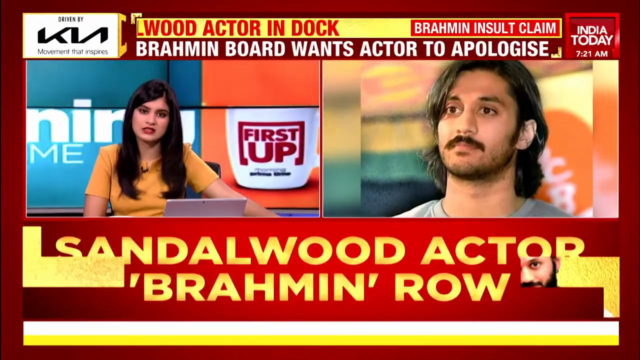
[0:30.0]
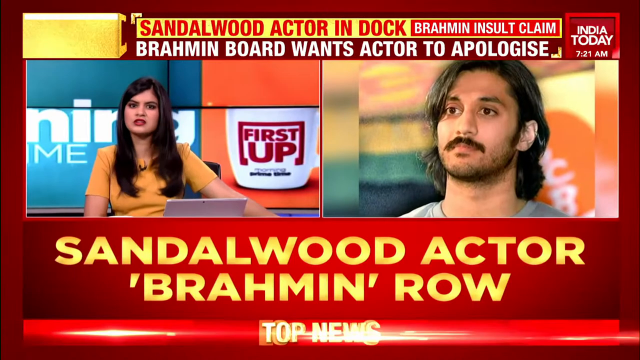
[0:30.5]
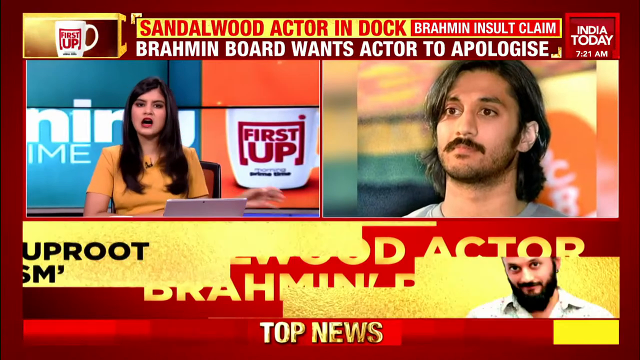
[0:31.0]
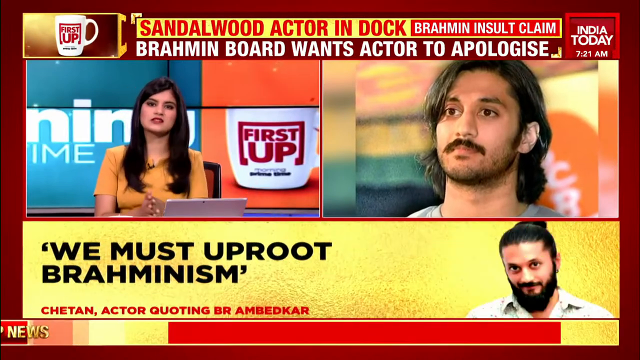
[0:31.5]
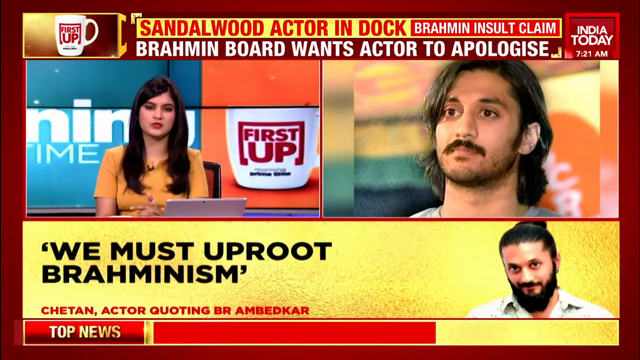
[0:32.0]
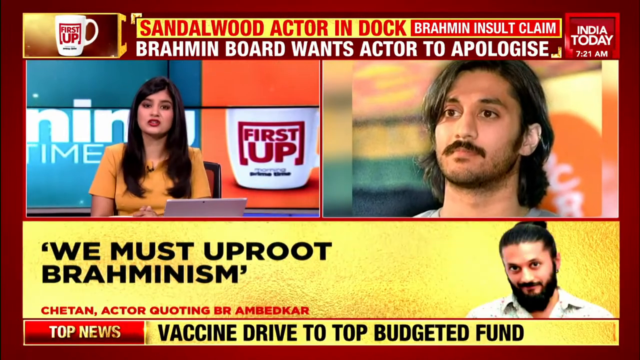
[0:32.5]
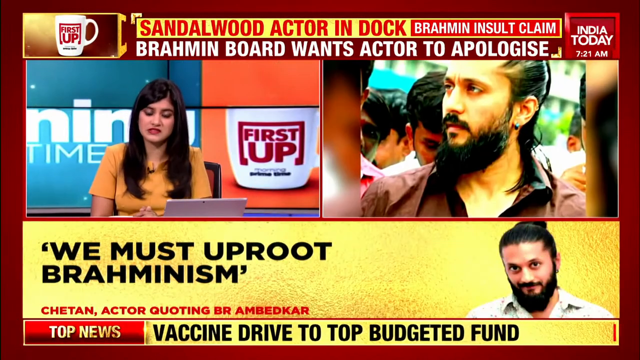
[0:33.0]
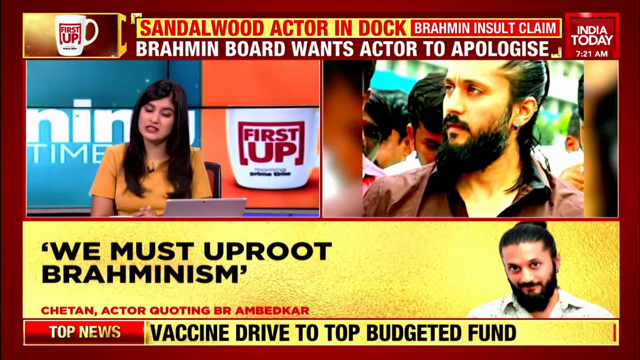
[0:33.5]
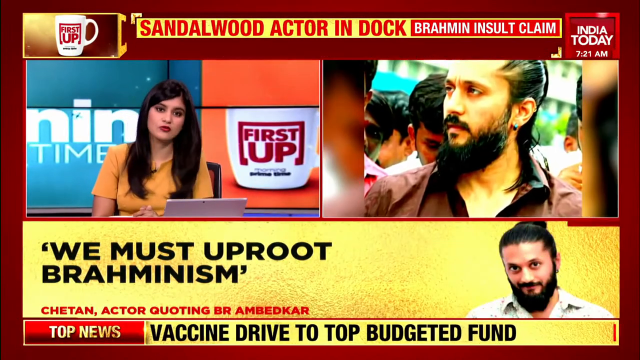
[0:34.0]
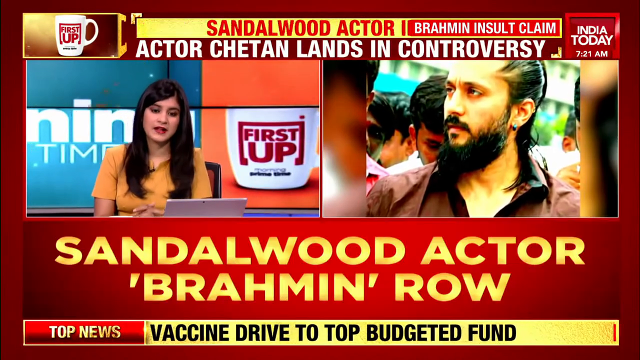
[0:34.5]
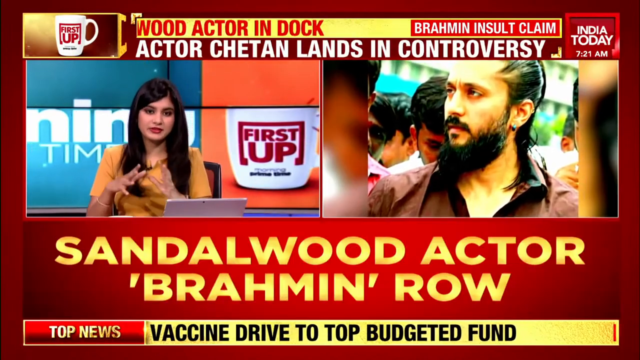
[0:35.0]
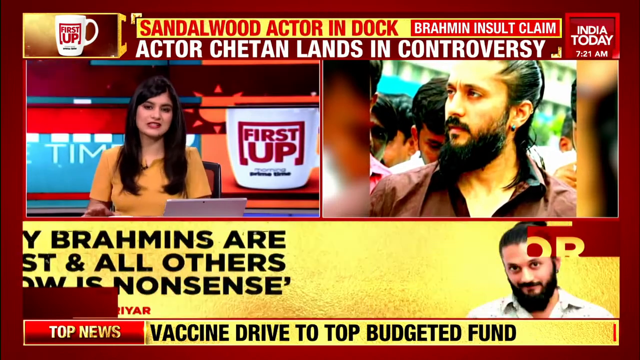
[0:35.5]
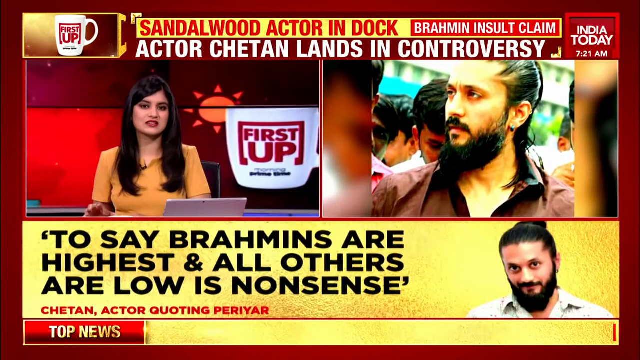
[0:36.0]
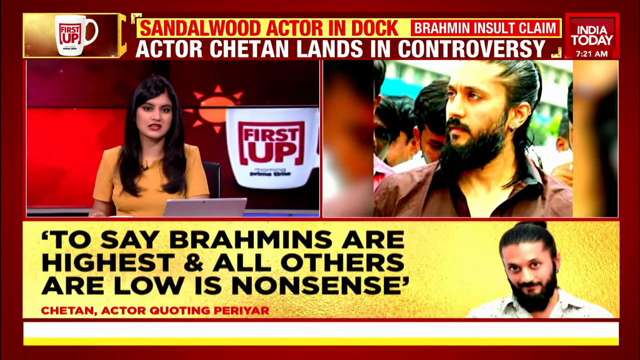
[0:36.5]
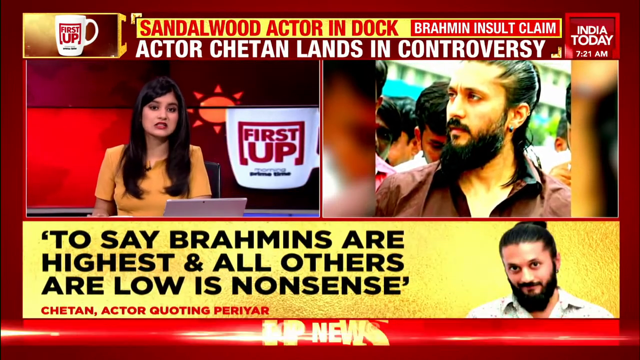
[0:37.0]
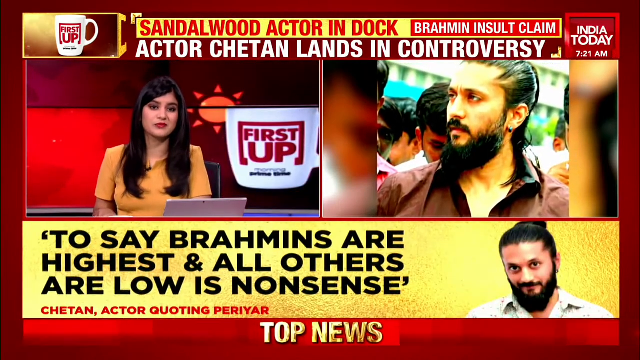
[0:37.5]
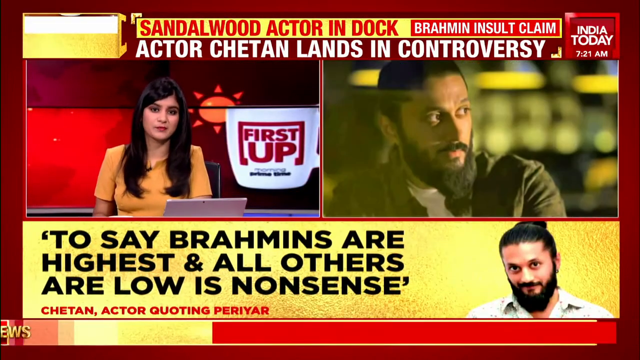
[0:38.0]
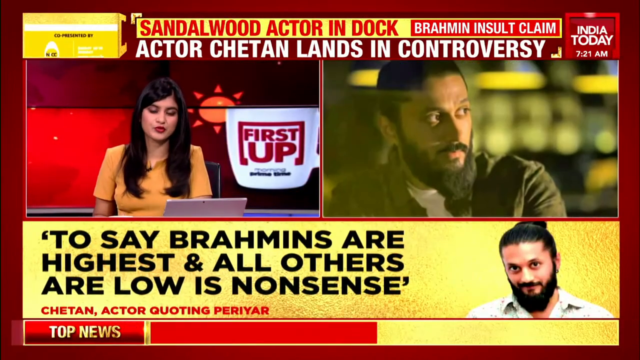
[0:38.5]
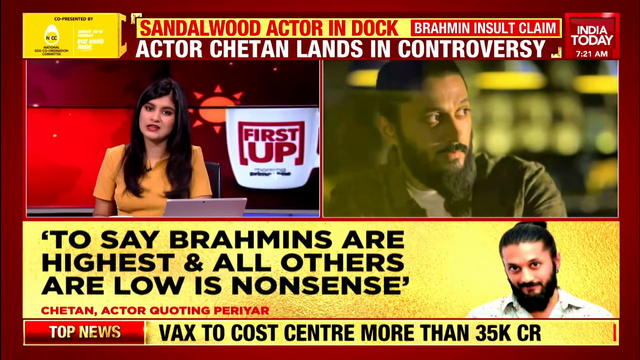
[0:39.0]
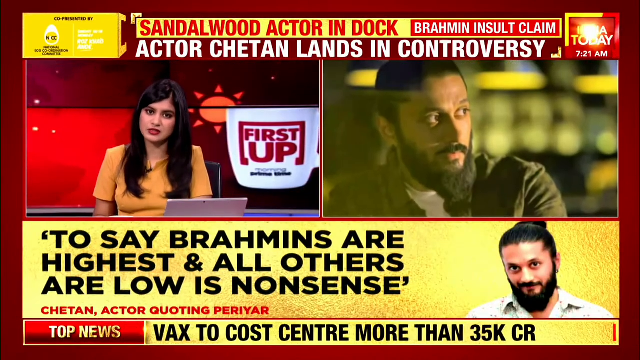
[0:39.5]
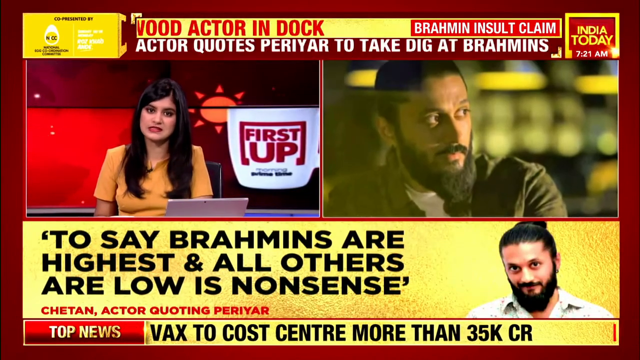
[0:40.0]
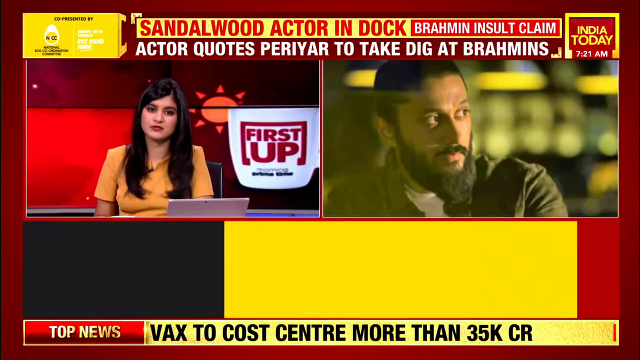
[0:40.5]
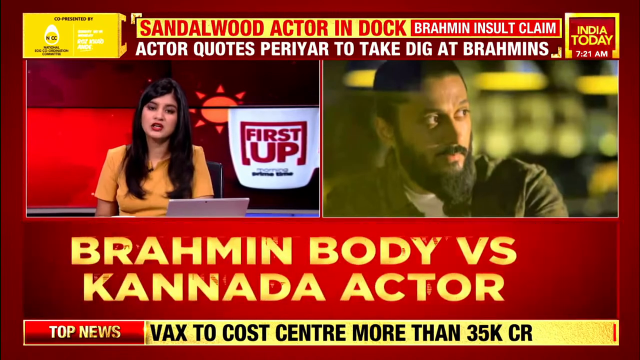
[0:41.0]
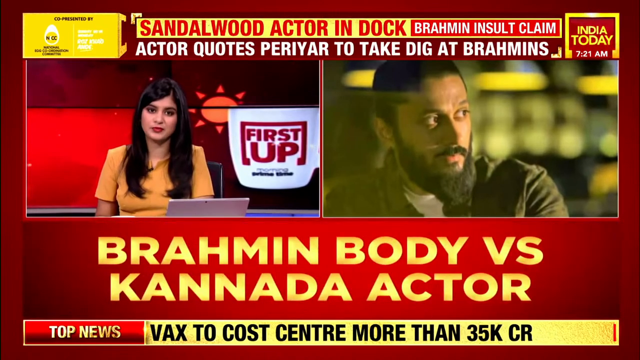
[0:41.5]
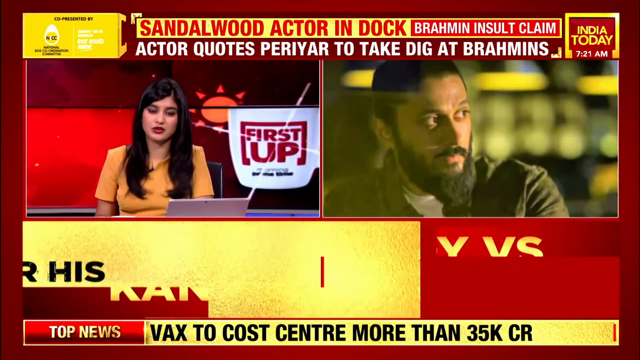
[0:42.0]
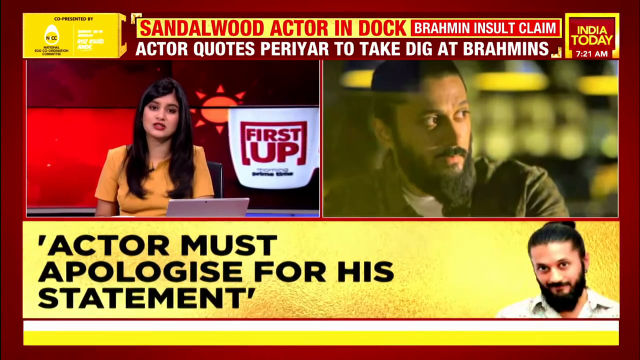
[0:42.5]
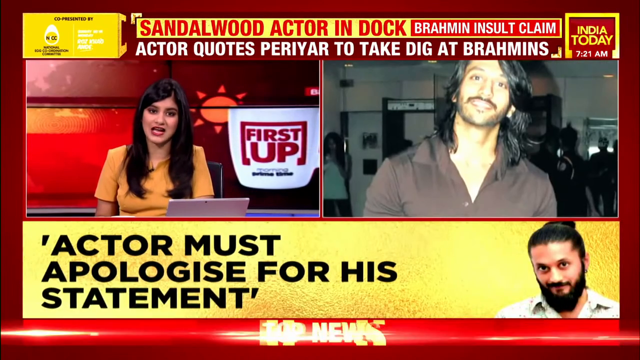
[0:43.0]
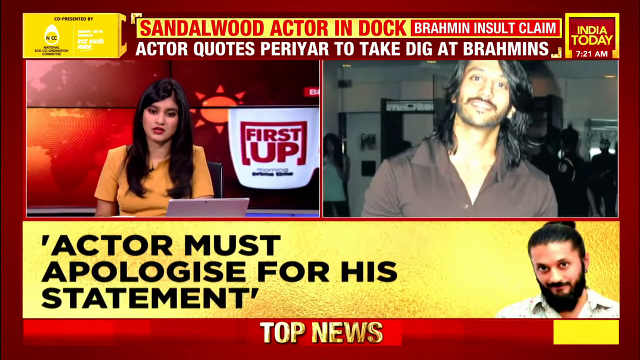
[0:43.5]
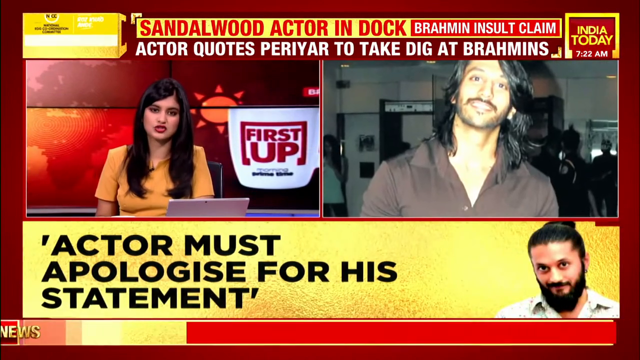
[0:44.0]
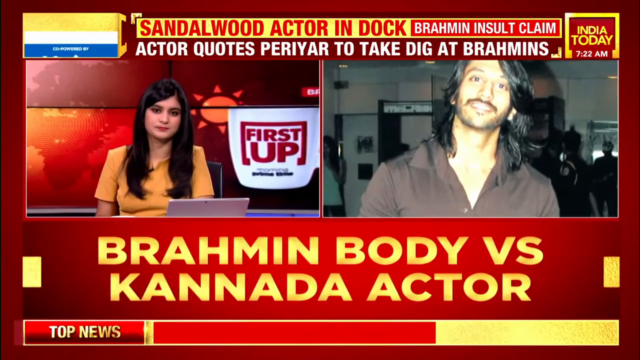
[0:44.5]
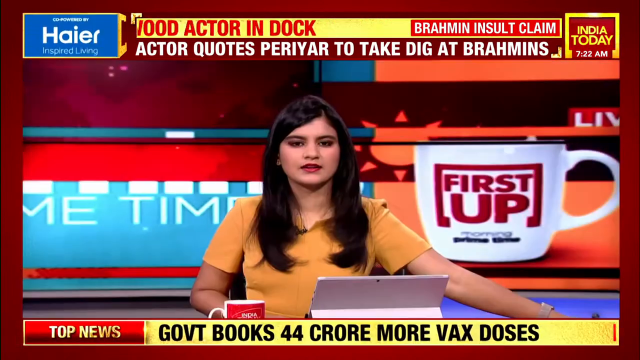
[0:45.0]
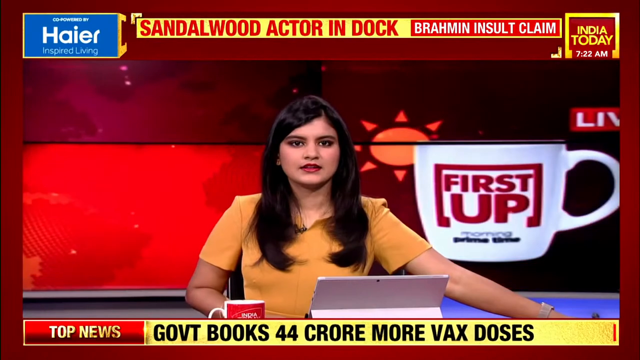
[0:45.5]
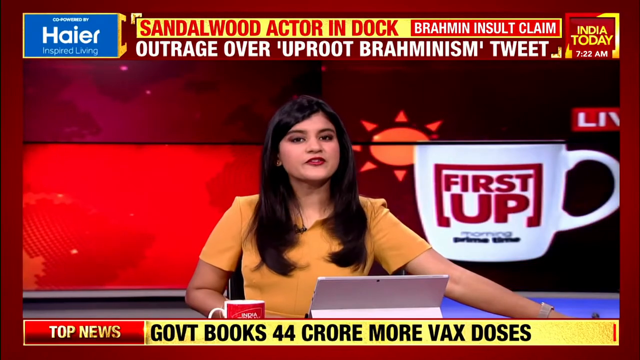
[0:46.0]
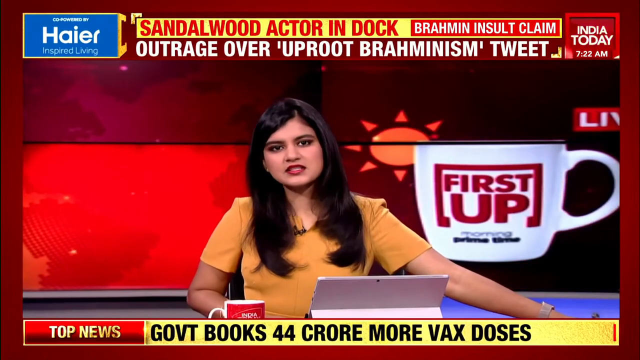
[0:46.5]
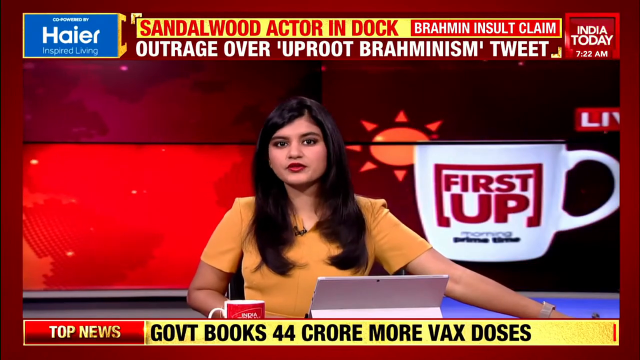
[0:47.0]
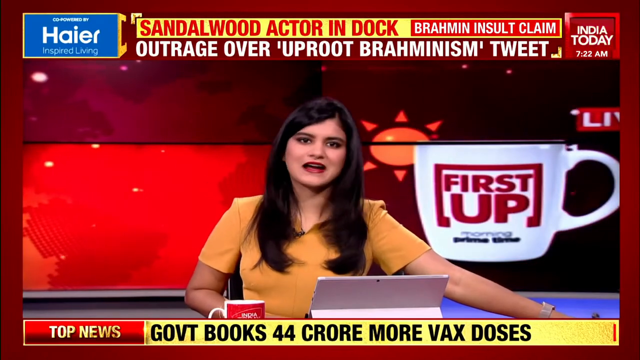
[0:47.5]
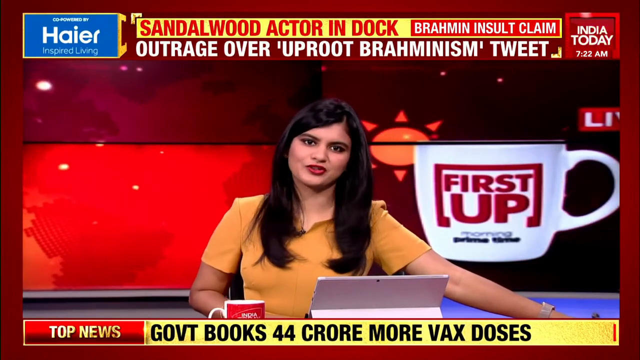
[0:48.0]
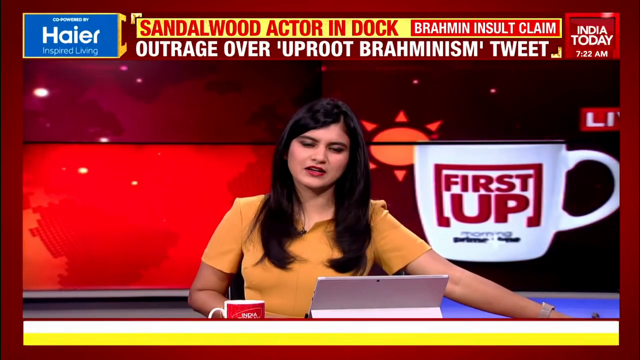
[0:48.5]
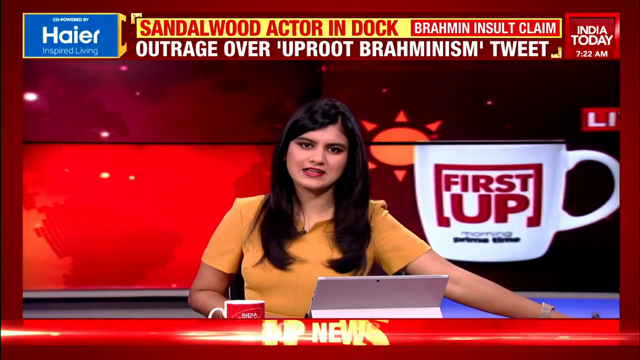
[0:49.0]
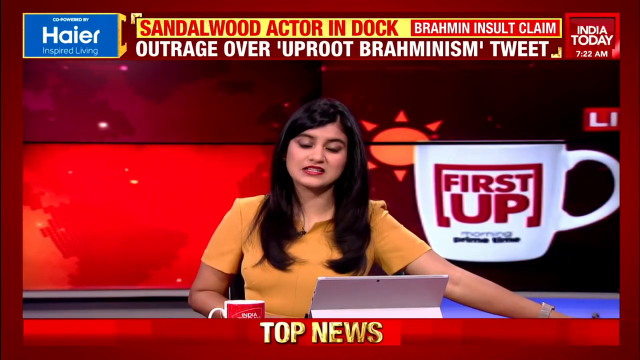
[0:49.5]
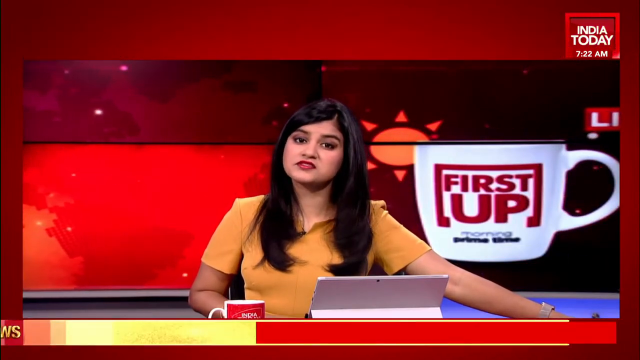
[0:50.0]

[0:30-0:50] The screen is split into two boxes. The woman news anchor is at her desk on the left side of the screen, and an actor is on the right. Underneath both of them, text reads "we must uproot Brahmanism." The woman has a laptop in front of her, and next to her is what looks like a picture of a cup that reads "first up." Text mentions the "Sandalwood actor" and reads "to say Brahmans are highest and all others are low is nonsense." Pictures of the actor appear on the right side of the screen. Further text reads "Brahman body, actor must apologize for his statement" and refers to "outrage over the uproot Brahmanism tweet." Underneath both boxes, text reads "Sandalwood actor." Some sponsor advertisements appear at the top left, and "India today, 7.21 AM" appears at the top right.